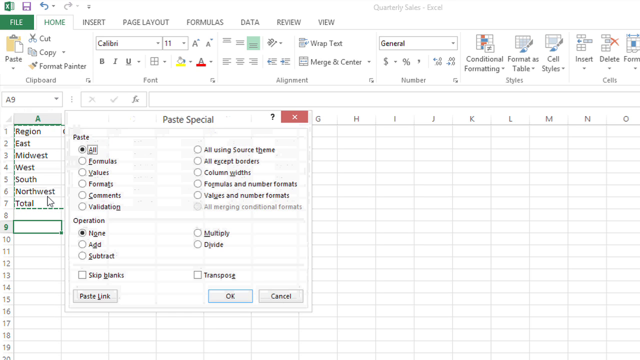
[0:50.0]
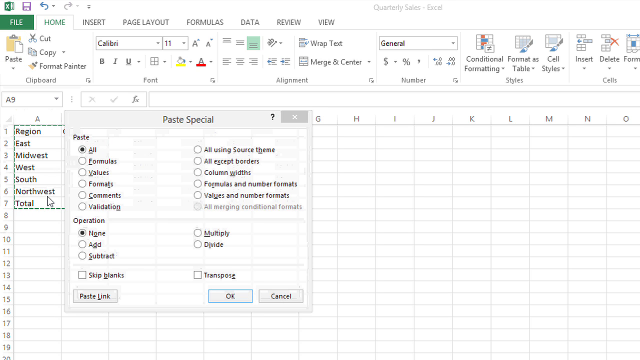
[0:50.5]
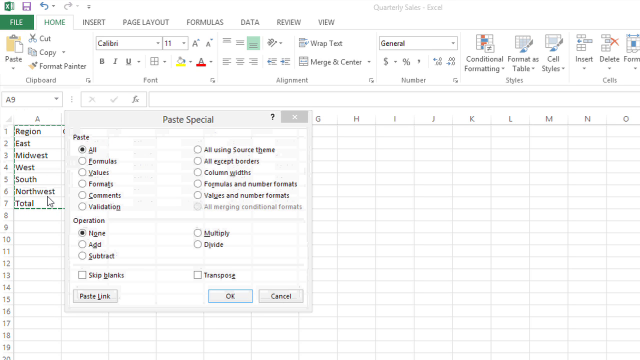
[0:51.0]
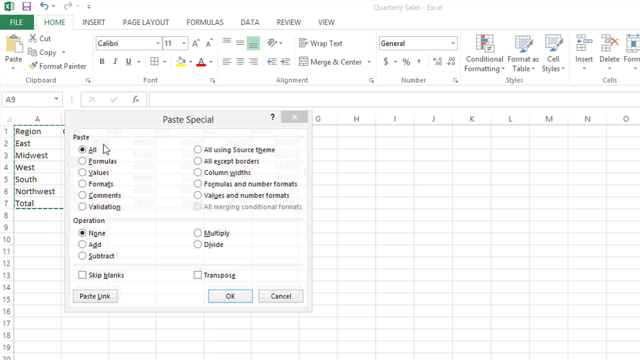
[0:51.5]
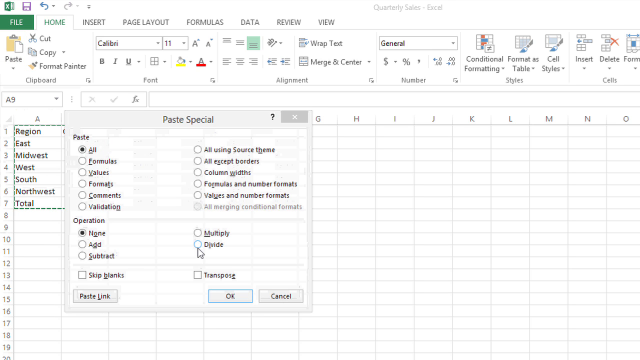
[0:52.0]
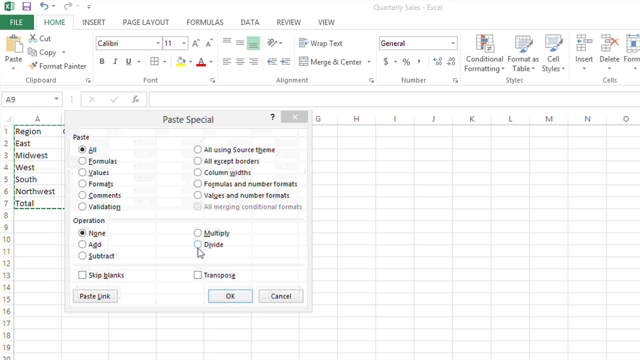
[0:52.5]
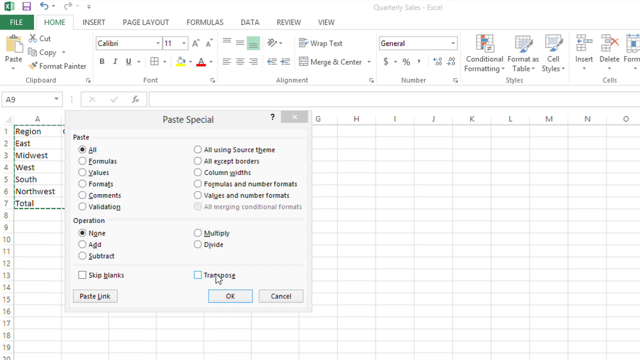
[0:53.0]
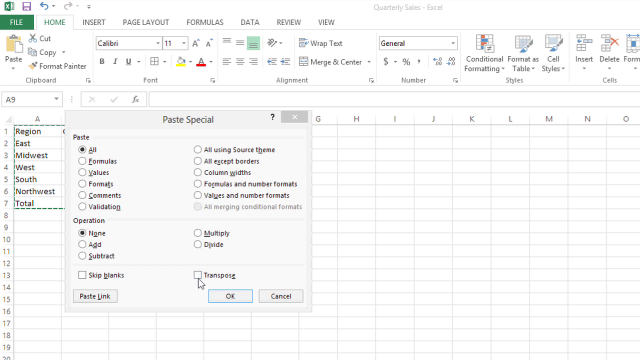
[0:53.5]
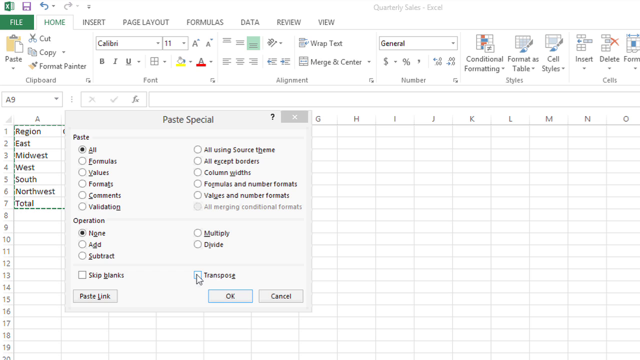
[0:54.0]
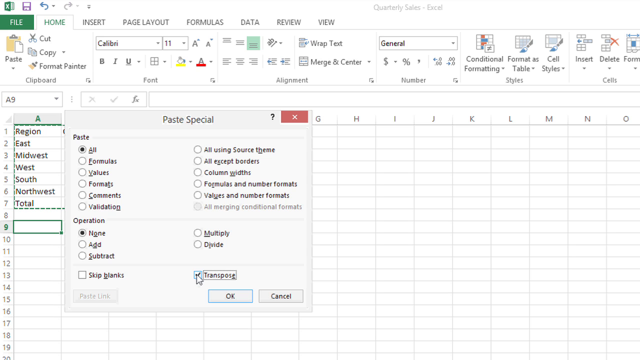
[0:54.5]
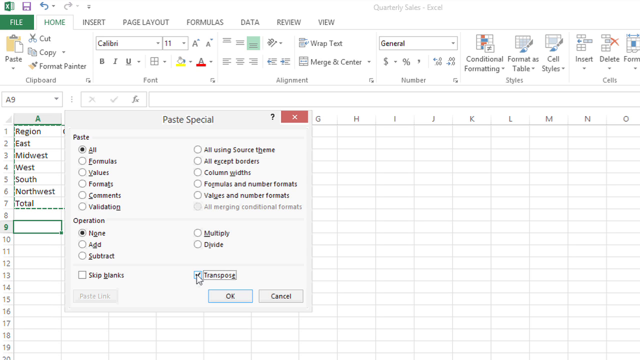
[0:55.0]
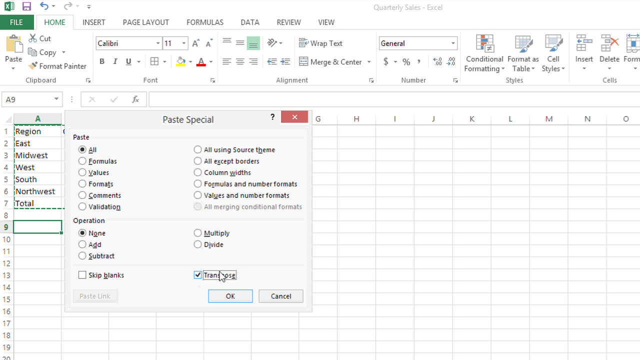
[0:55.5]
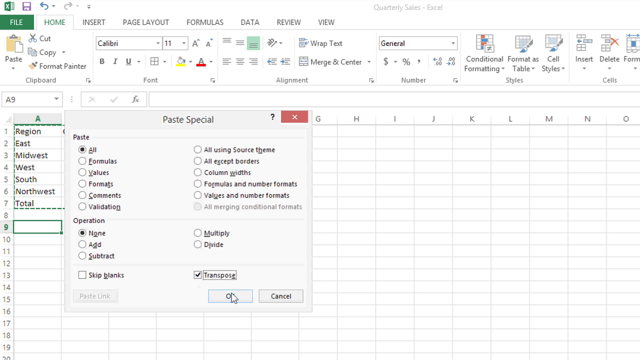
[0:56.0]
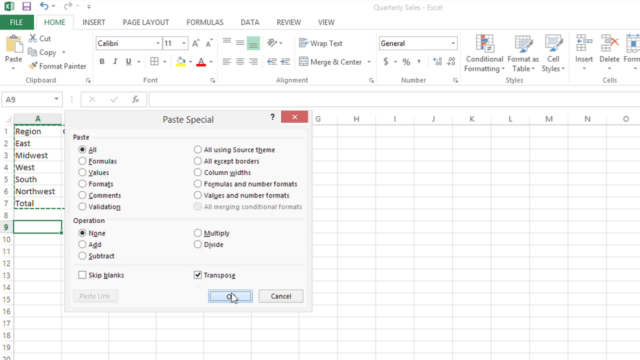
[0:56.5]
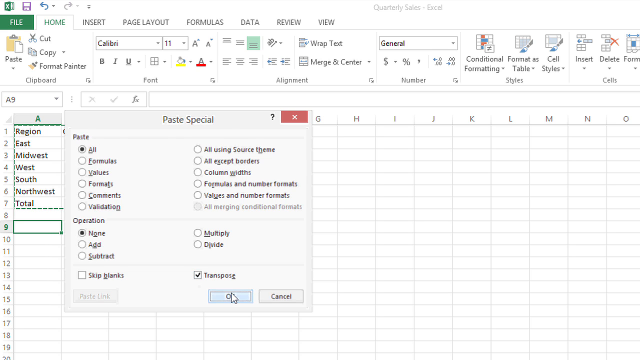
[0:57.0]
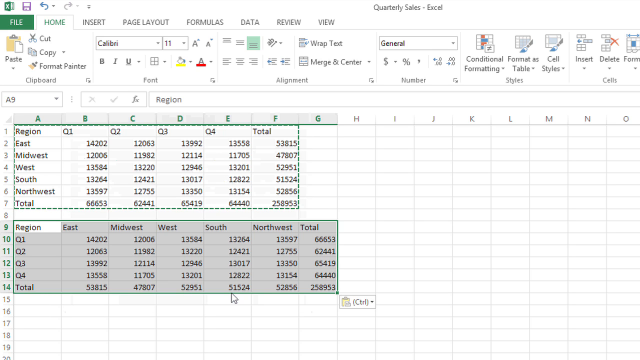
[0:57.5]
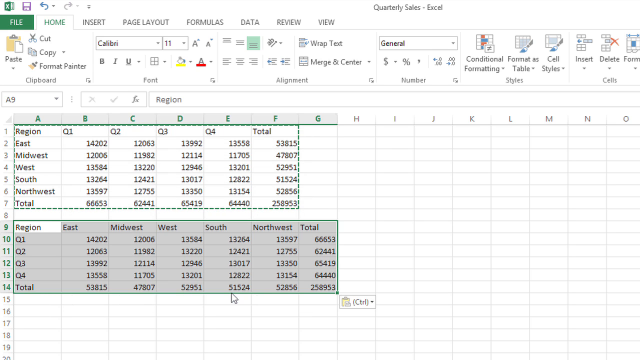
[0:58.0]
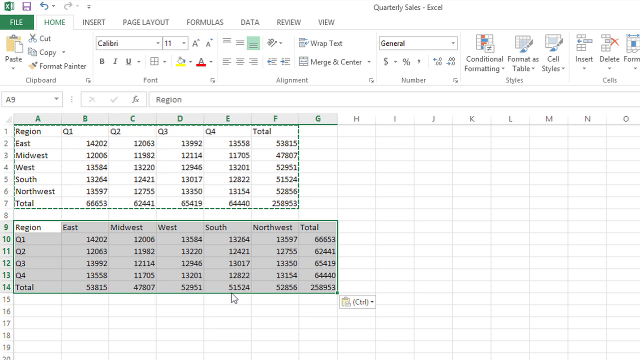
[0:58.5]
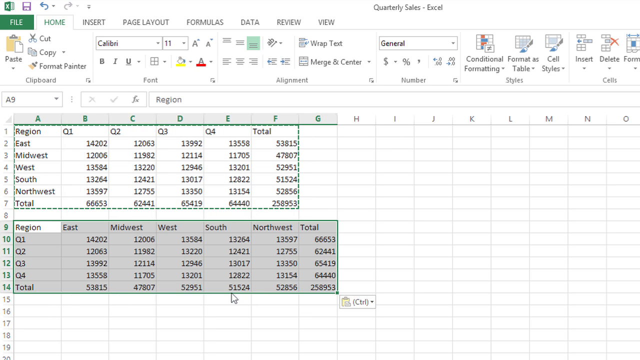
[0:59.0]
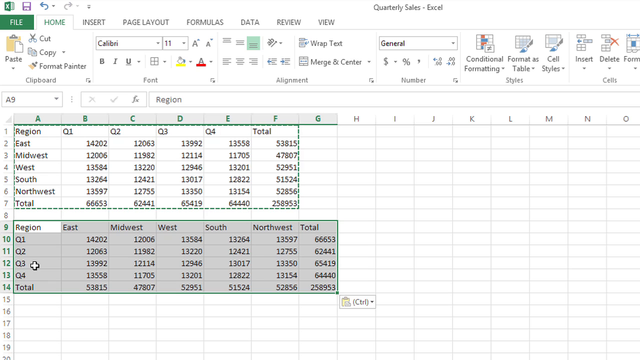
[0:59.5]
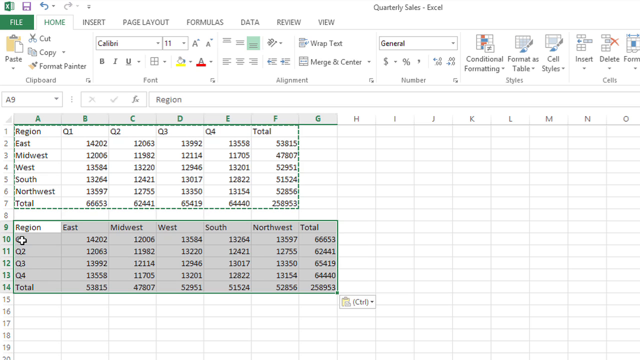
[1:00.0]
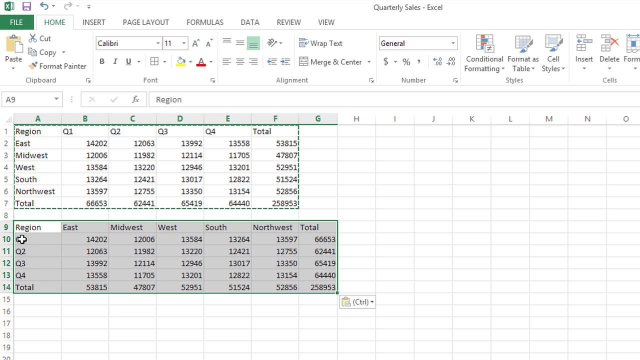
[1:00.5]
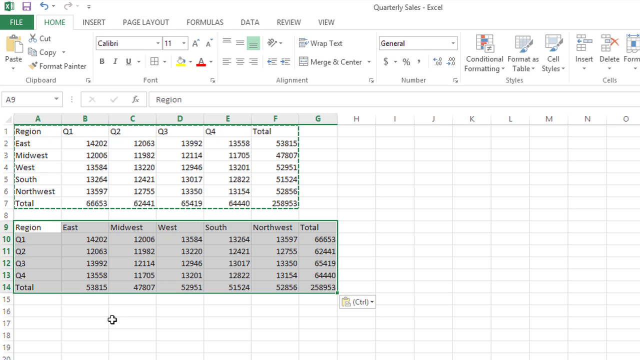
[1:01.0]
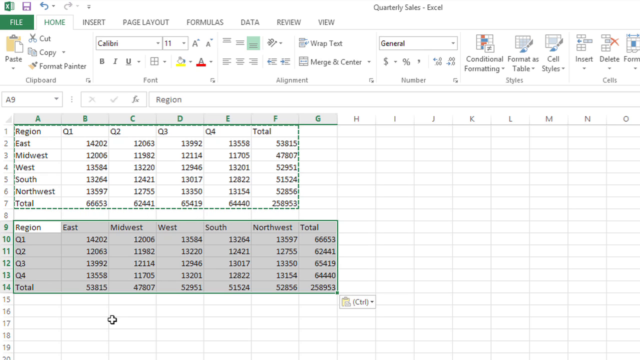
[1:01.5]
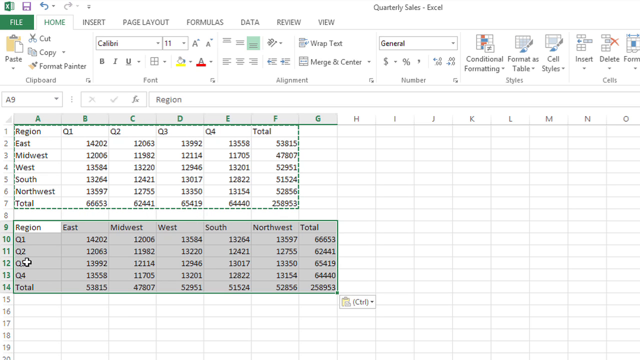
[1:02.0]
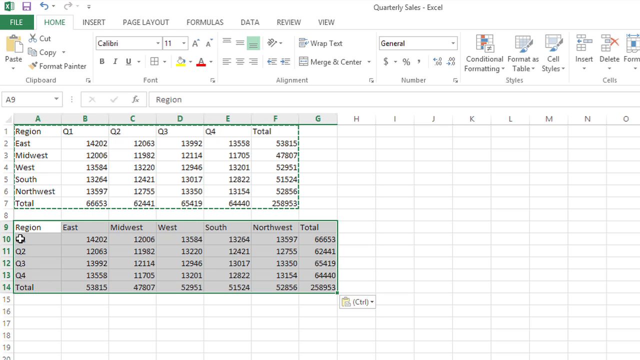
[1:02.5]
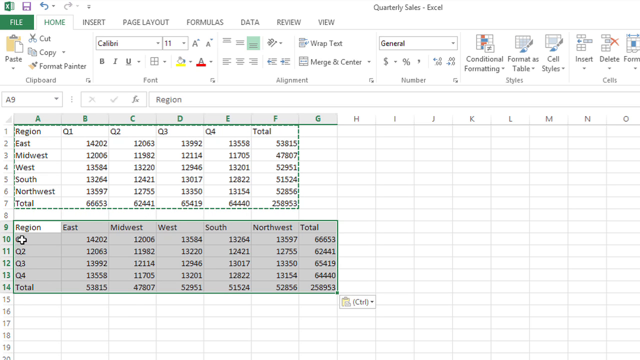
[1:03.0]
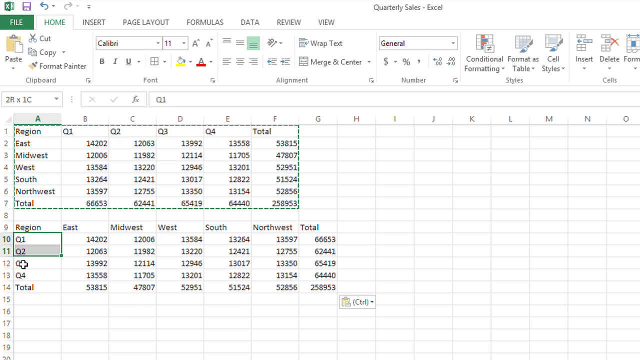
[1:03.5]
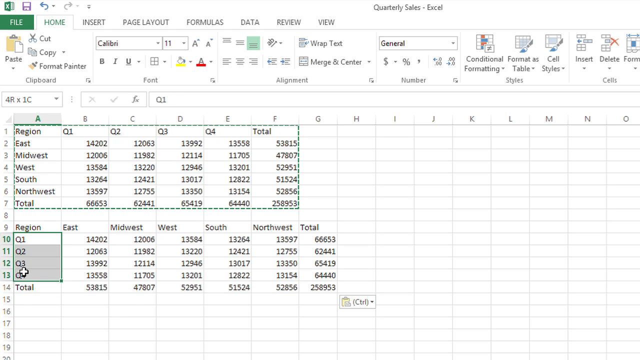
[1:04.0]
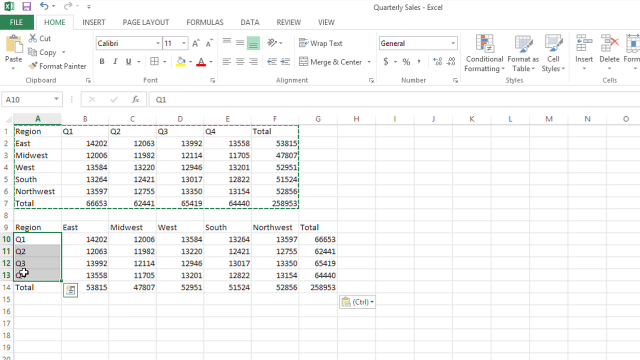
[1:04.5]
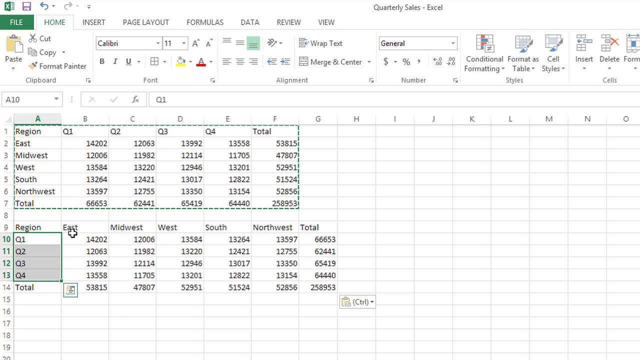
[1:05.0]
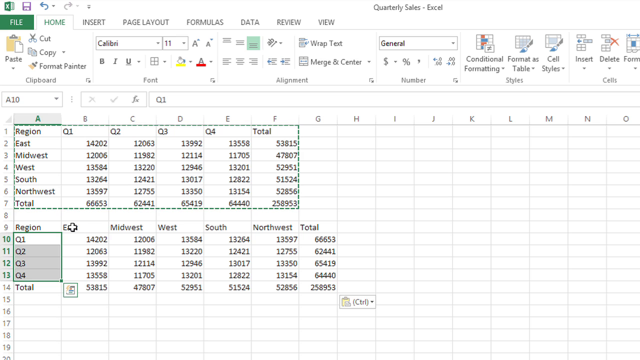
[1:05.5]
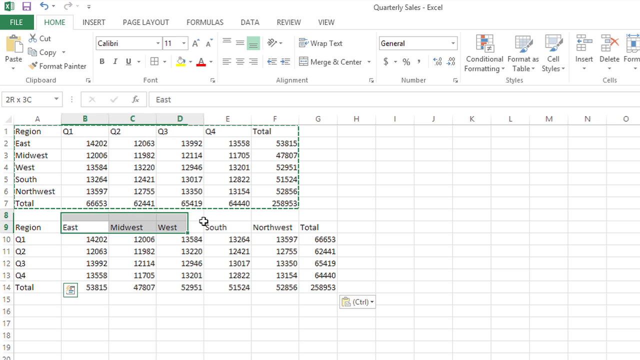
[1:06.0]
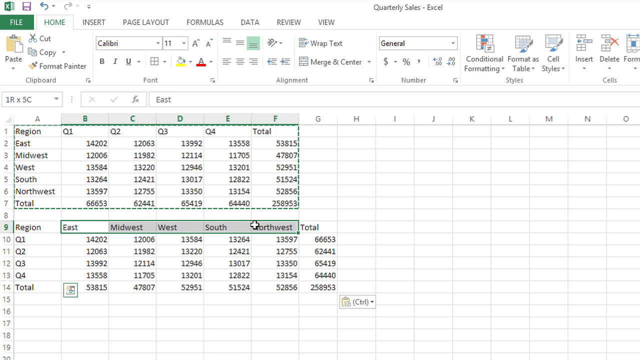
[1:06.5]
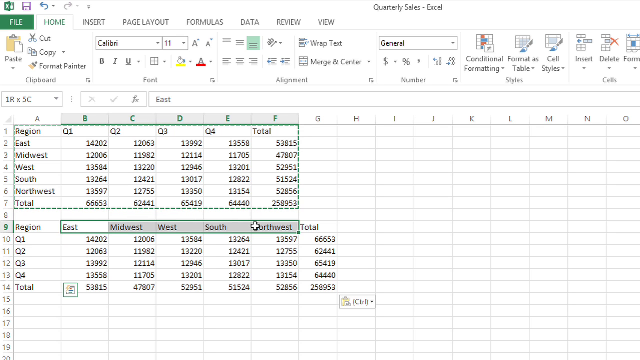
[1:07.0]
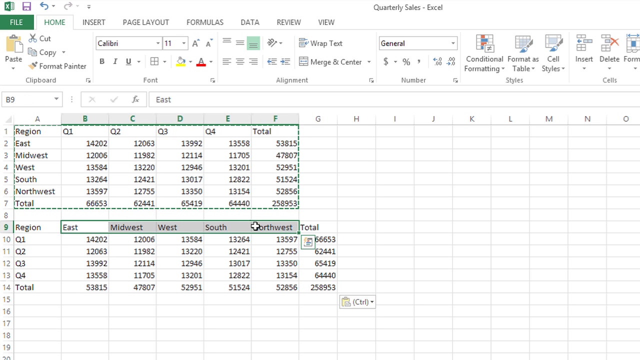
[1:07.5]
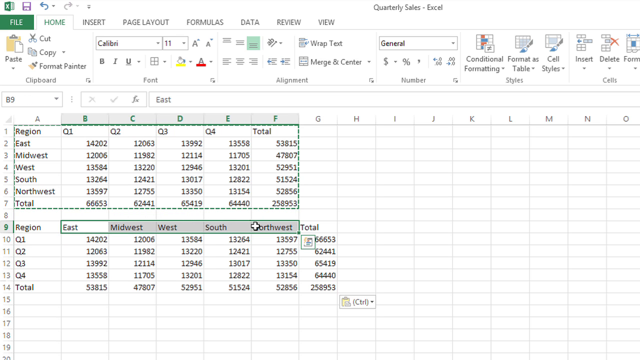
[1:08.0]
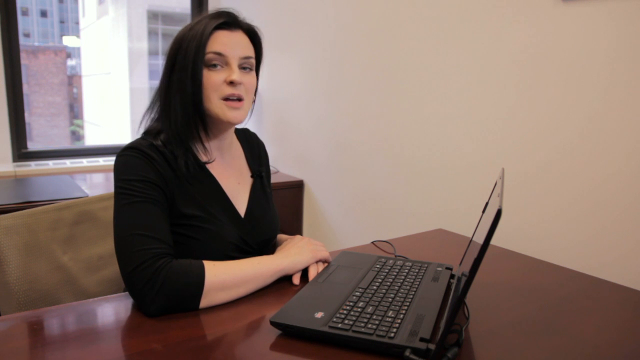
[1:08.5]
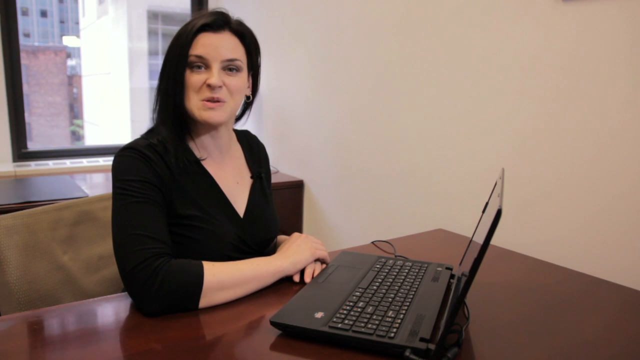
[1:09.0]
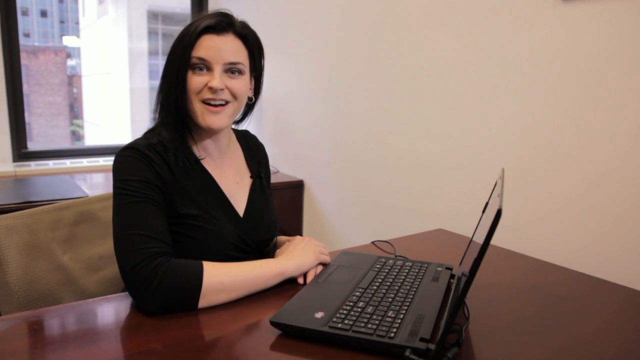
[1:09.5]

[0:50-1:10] On the Excel spreadsheet showing quarterly sales, a box labeled "Paste Special" is at the forefront of the screen, with different icons. The highlighted options are "Paste All" and "Operation None", and the mouse cursor is just to the left of them. The cursor moves around, clicks an option labeled "Transpose", and then clicks "OK". A region area is shown with East, Midwest, West, Southwest and Northwest and first, second, third and fourth quarters, and there looks to be another area below it showing the same quarters and regions. The mouse moves back and forth over the second box, highlighting the quarters and then the regions. The video then cuts to a woman sitting in an office with dark hair and a dark dress, in front of a laptop, with a window behind her.